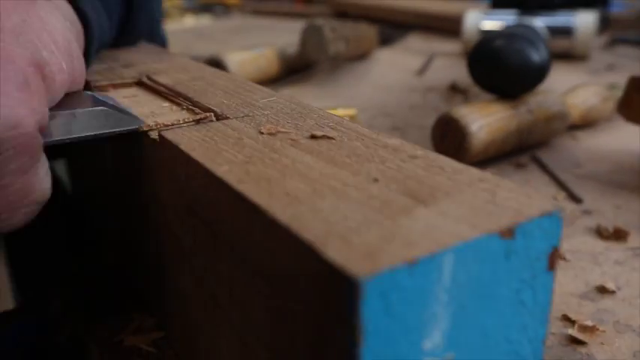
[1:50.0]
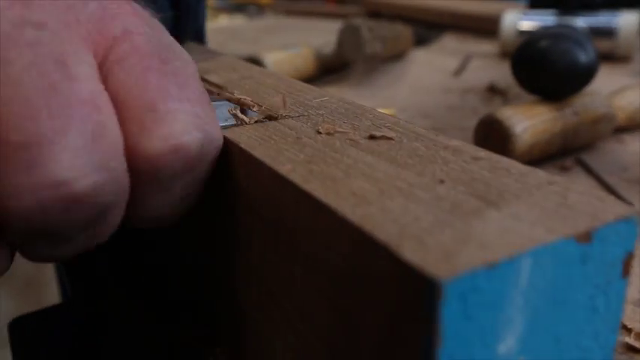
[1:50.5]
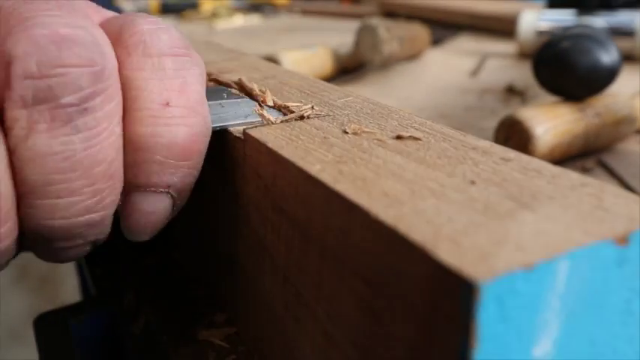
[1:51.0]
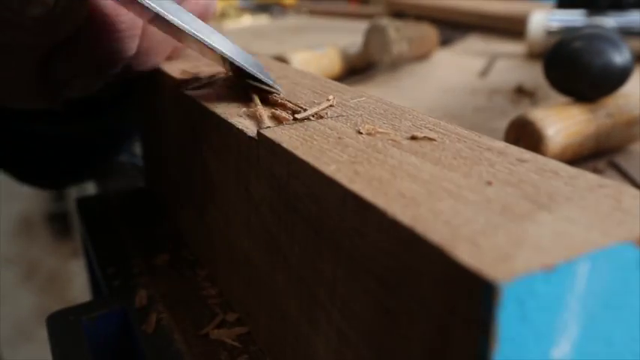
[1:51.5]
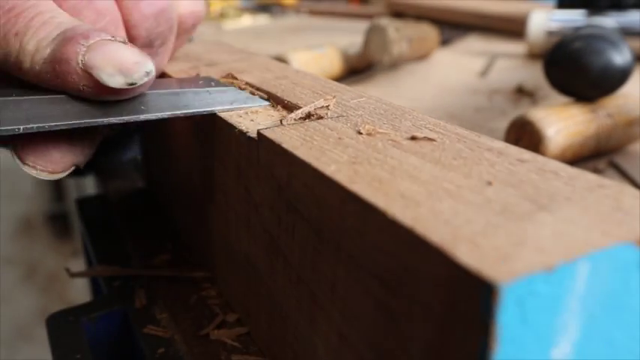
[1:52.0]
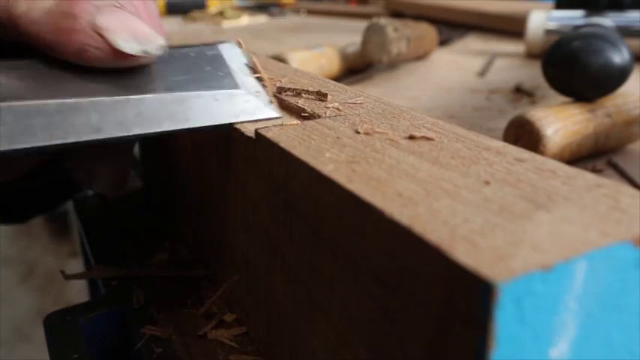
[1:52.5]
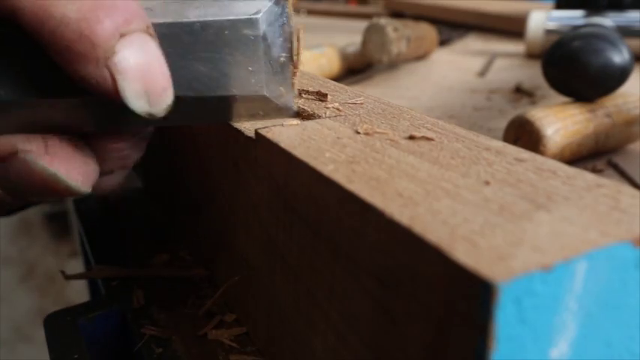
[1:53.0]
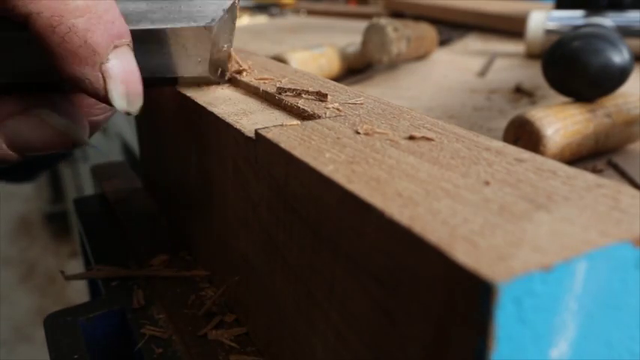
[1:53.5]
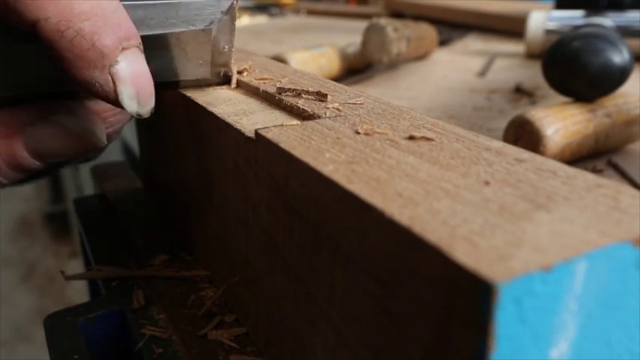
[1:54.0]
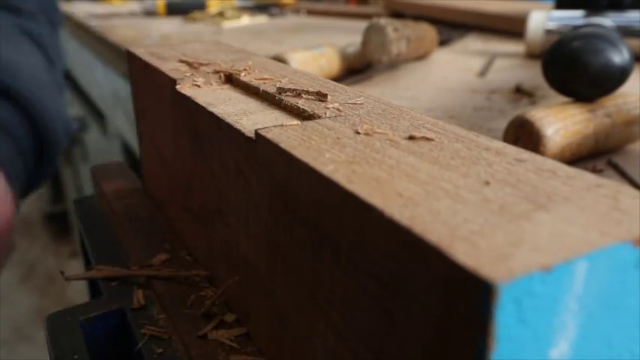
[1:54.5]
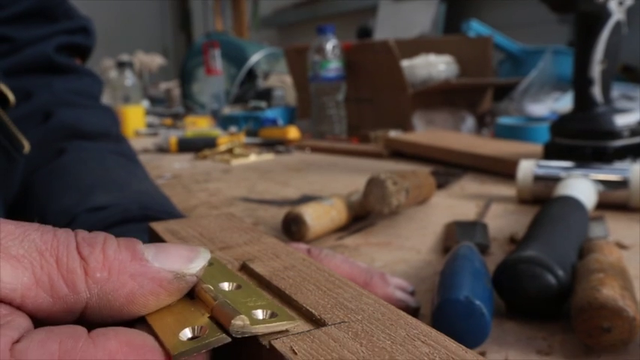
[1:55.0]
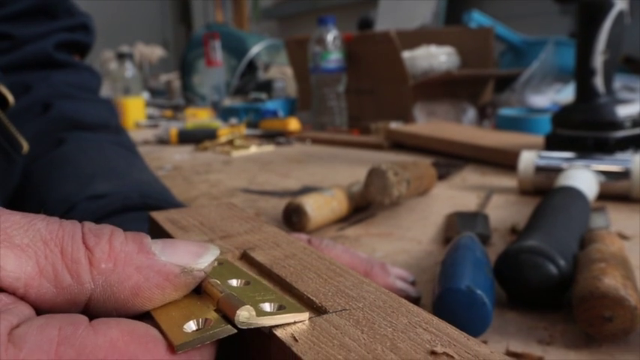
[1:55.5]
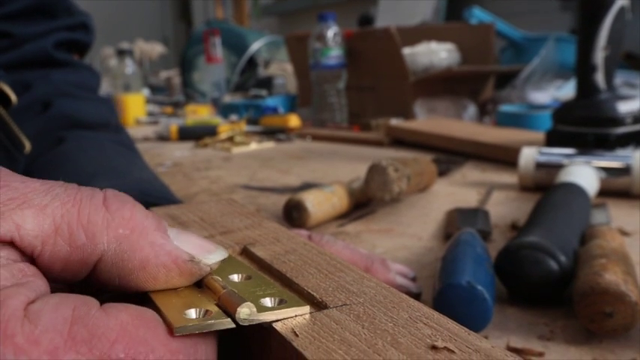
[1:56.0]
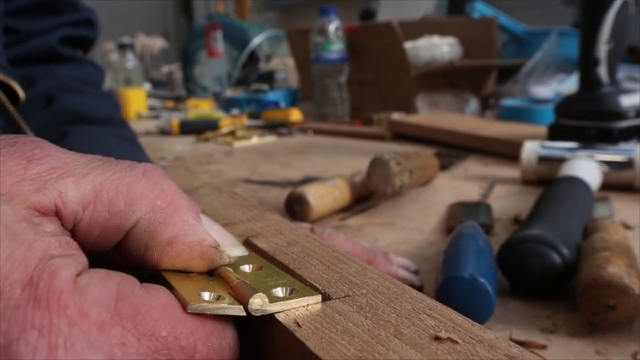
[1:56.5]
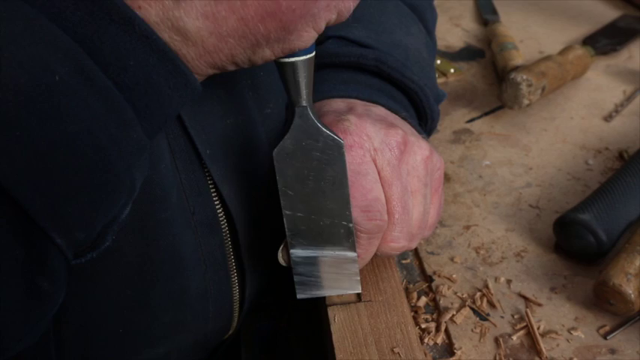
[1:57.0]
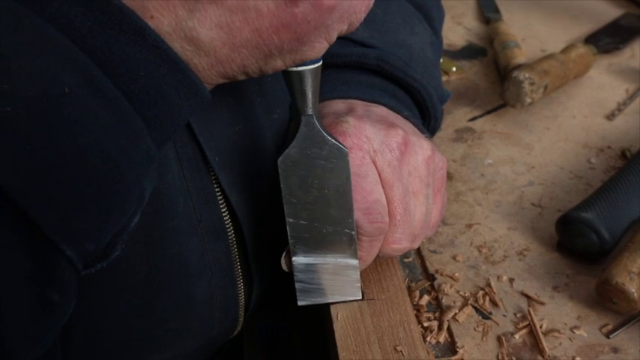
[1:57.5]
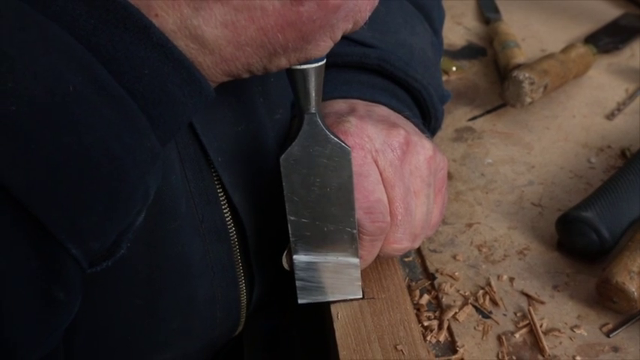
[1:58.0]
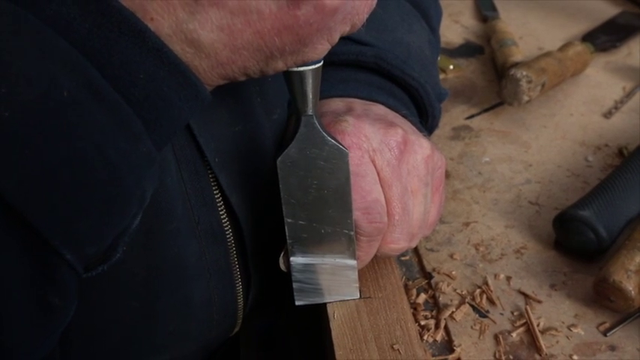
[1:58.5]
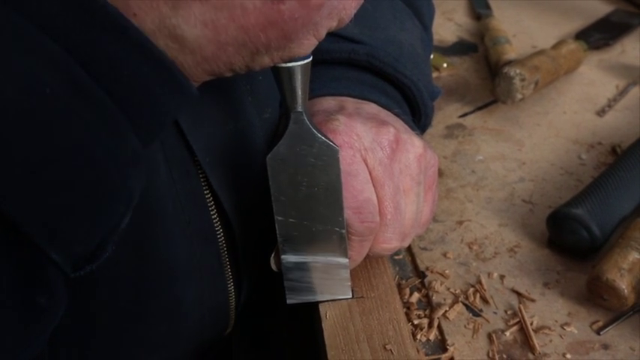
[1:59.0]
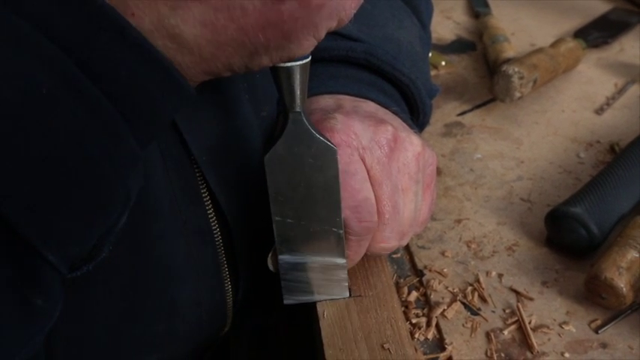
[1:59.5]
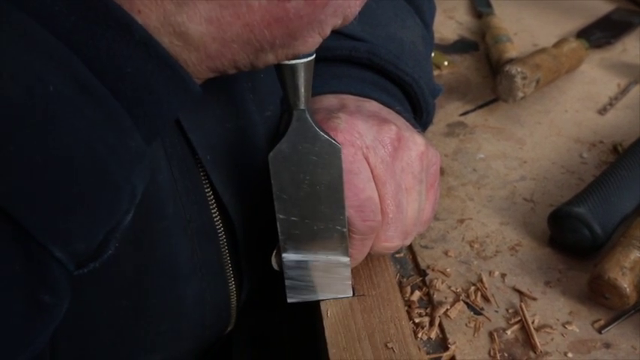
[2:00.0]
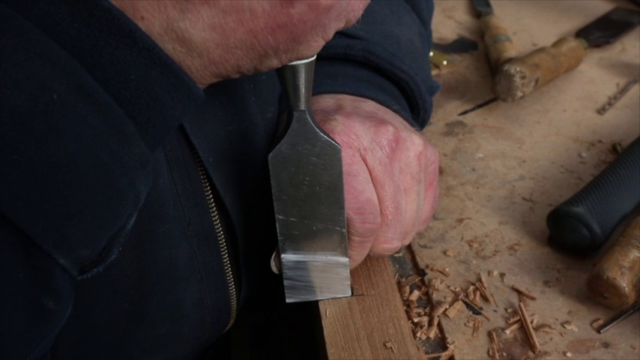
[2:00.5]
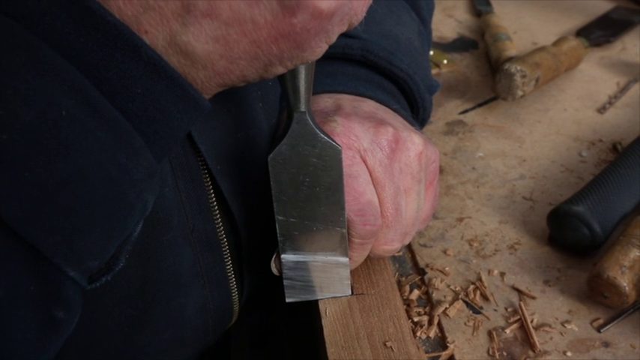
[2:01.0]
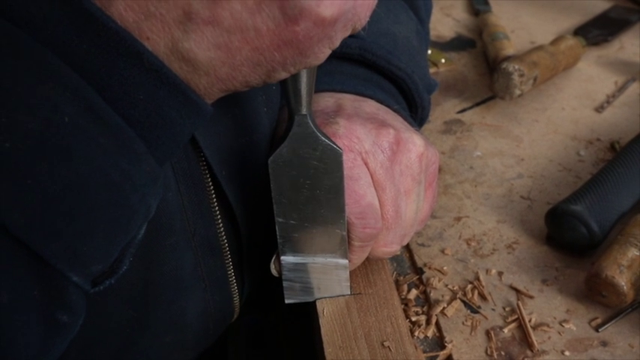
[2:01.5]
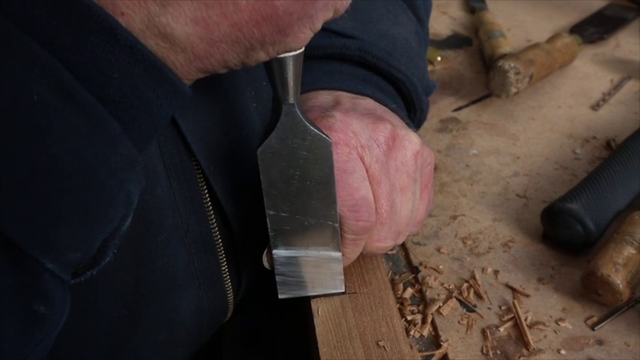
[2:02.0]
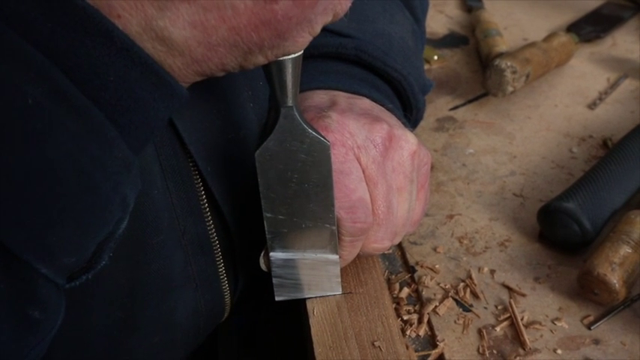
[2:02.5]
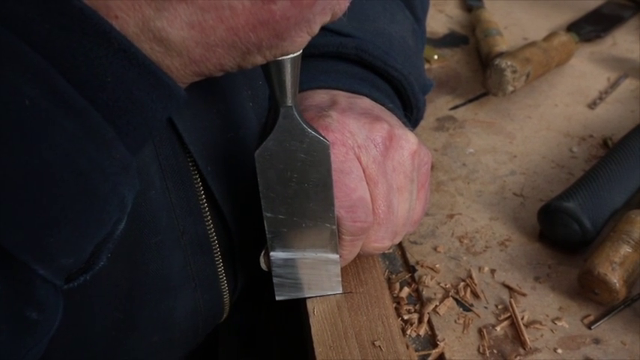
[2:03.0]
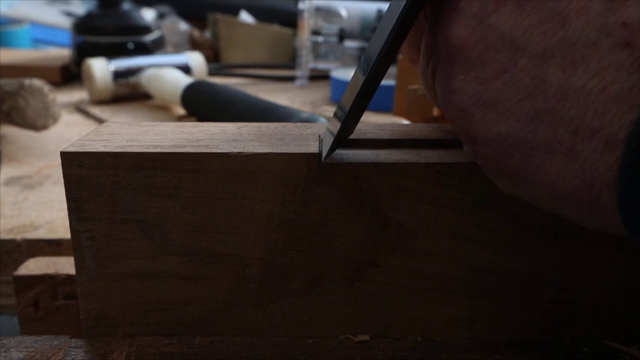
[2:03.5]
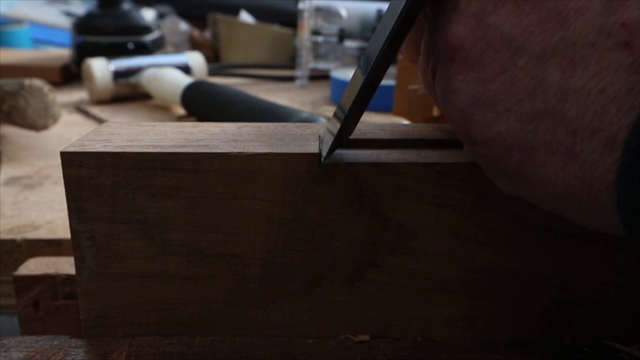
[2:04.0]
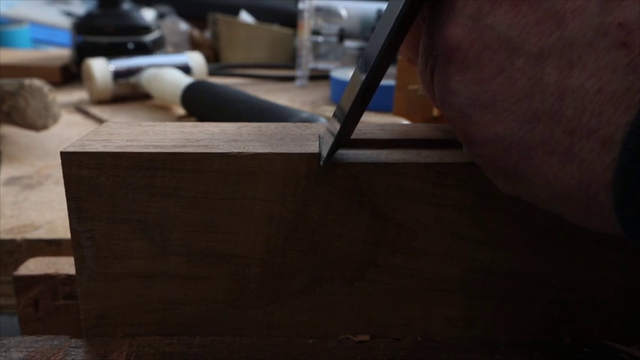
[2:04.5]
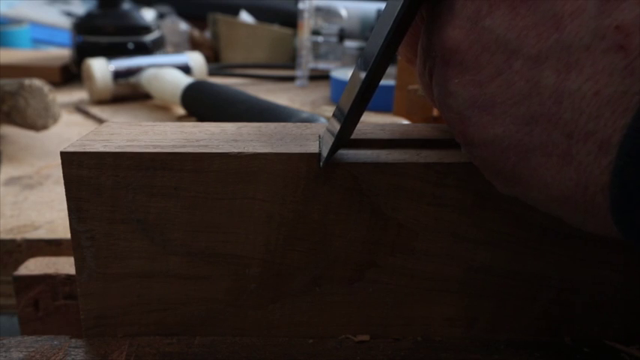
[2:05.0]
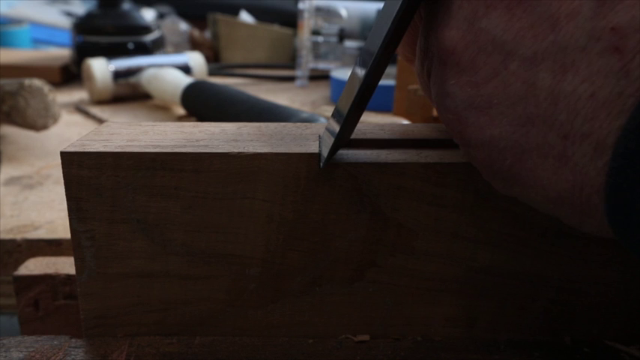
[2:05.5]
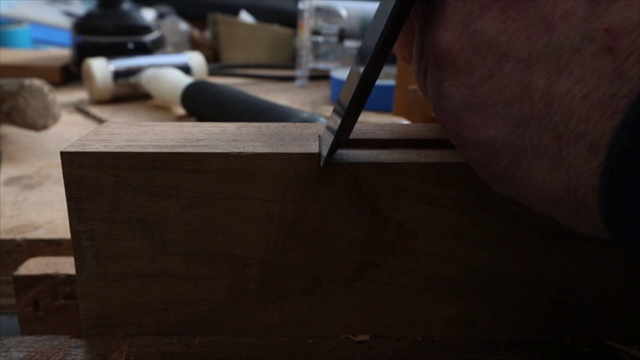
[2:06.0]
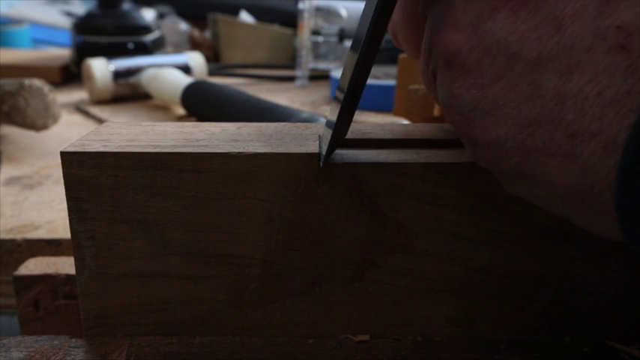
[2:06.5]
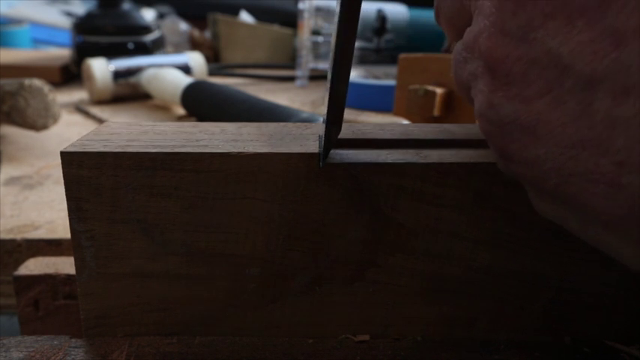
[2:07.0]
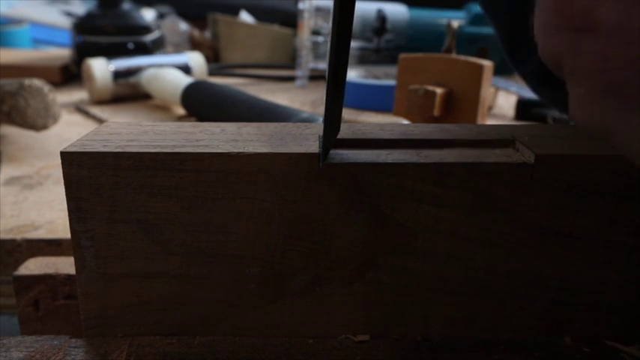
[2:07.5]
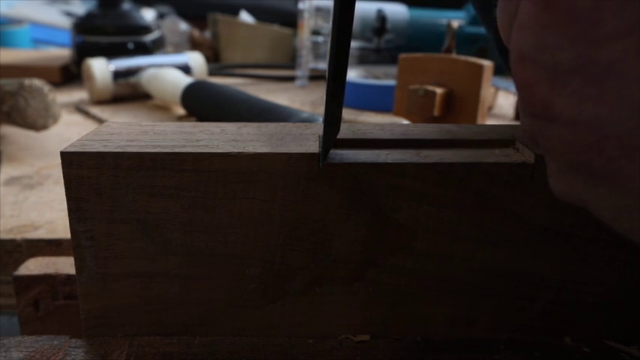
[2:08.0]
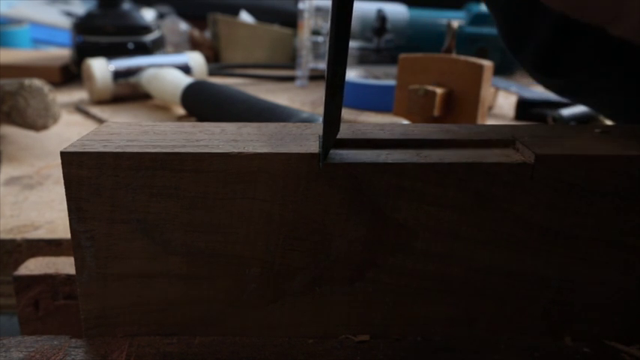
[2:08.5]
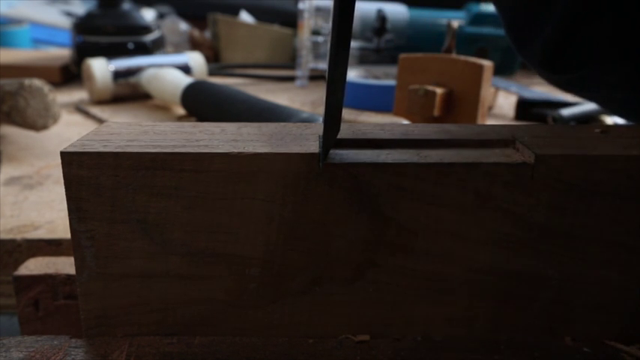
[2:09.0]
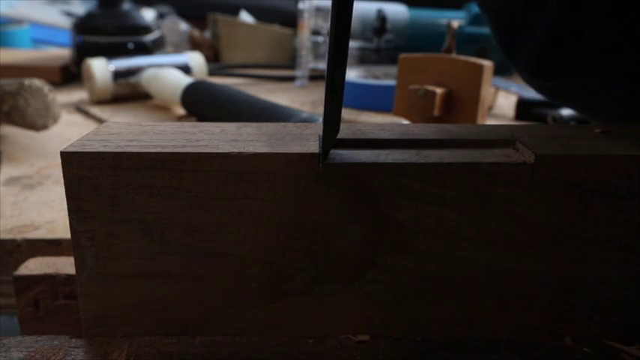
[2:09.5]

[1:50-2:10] The person chisels finely around the edges, refining them so the hinge can go in smoothly. He then works from the top with another, different chisel that has different angles and seems a little sharper, digging into the angles and slowly peeling back the wedge. He holds the hinge in his hand and slowly guides it into the recess, and it seems to fit almost perfectly. Another overhead view shows him seemingly making some final adjustments to the edges.